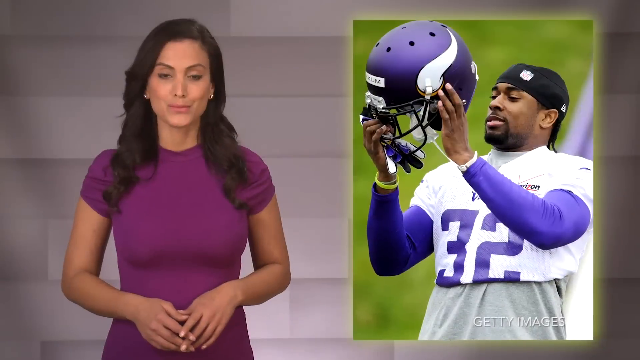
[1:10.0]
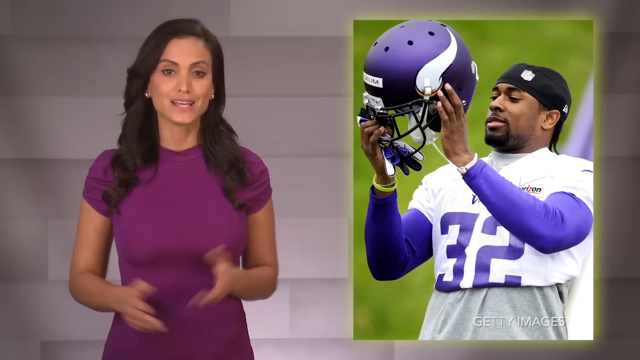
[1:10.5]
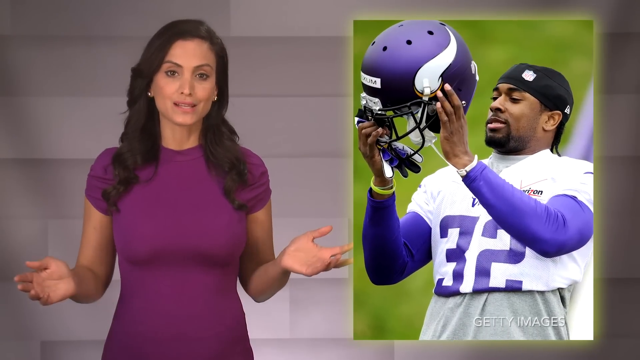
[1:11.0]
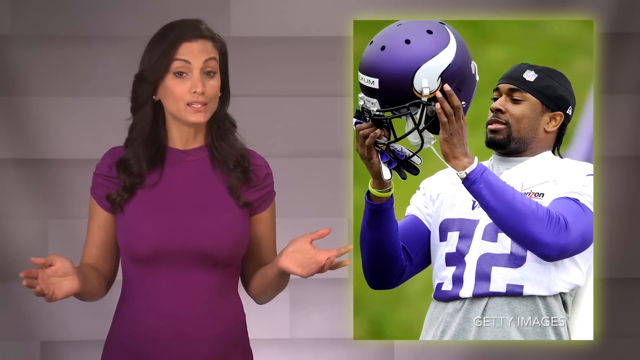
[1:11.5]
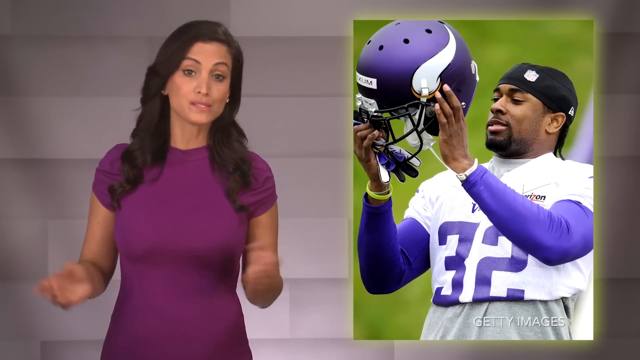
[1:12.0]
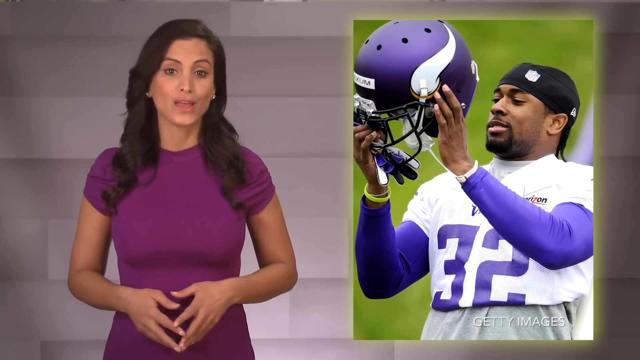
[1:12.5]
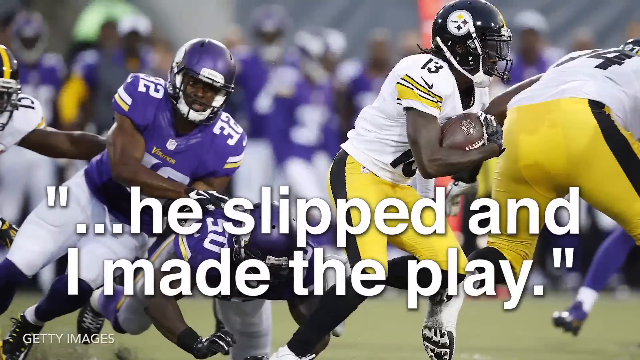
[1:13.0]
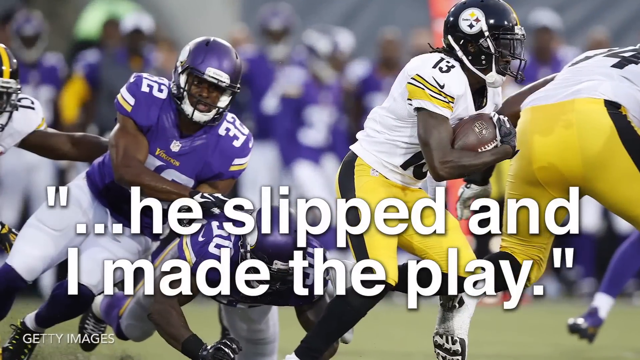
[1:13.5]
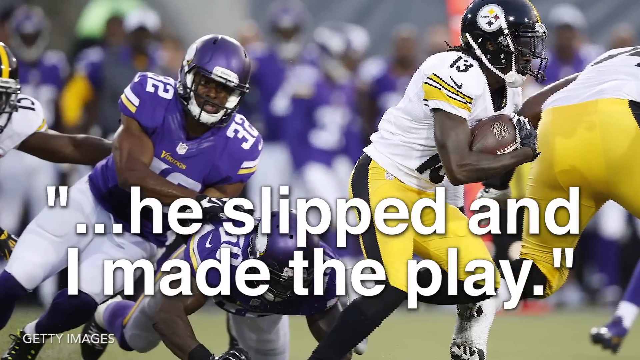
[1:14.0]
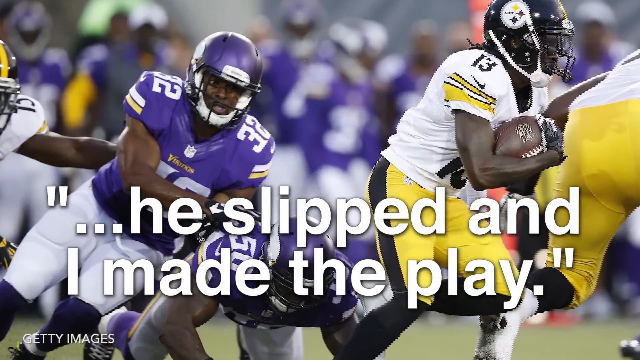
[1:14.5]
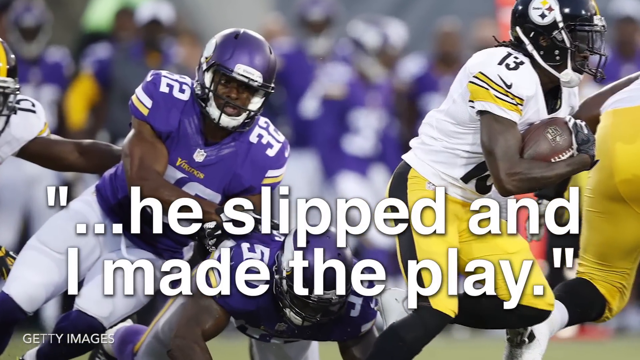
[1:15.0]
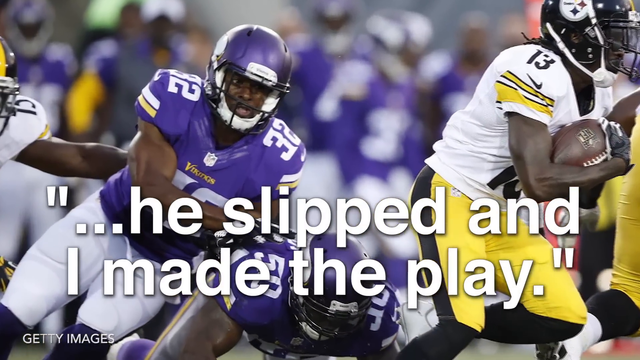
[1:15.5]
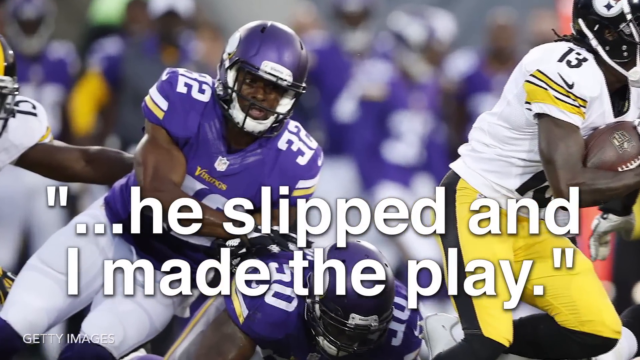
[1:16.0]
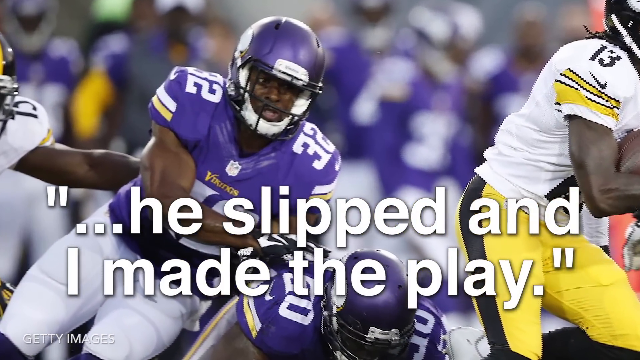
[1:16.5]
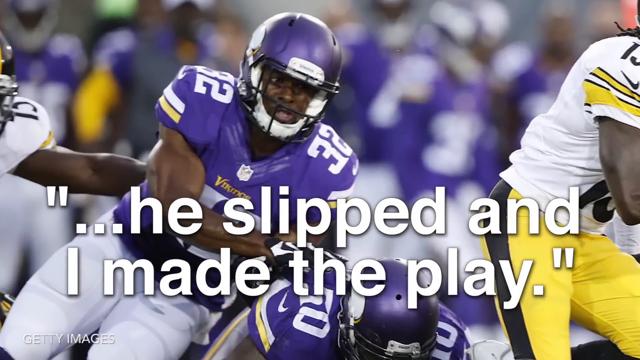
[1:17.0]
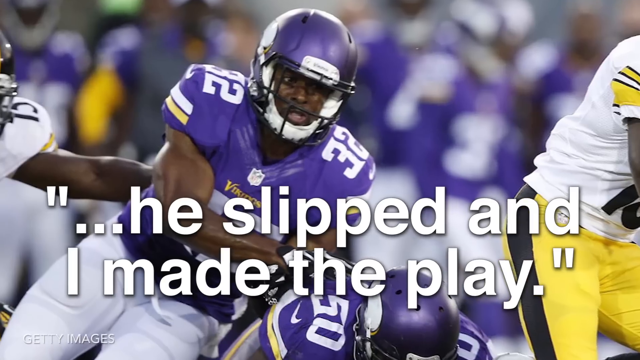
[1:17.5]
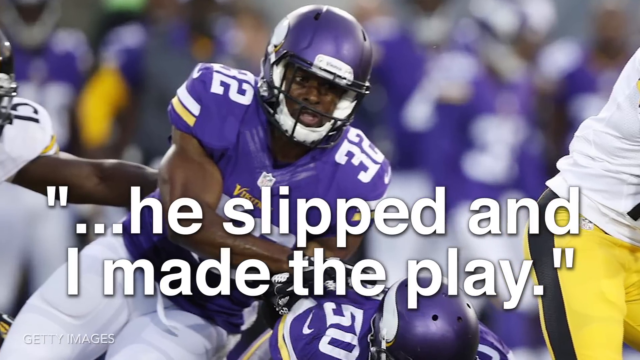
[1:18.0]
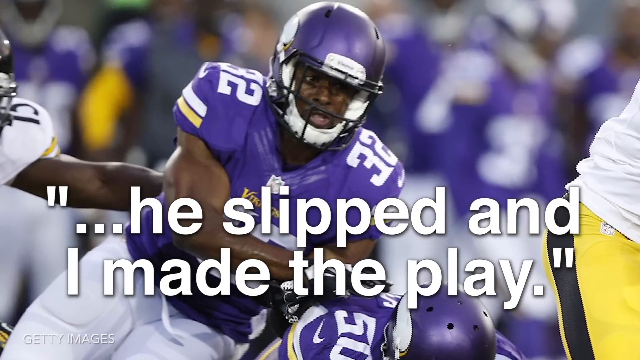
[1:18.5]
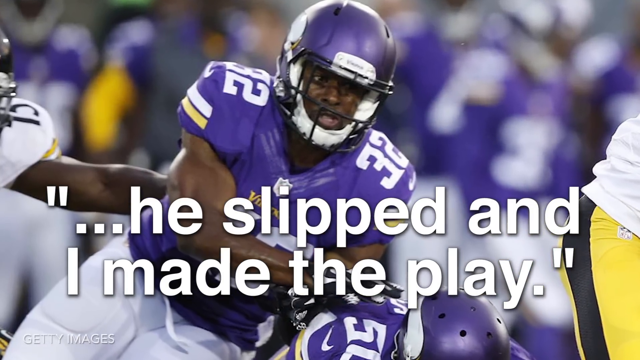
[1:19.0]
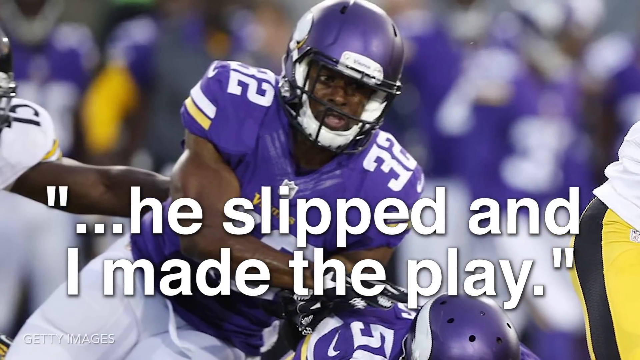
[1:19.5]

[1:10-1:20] A split screen shows, on the left, a woman with olive skin and dark hair who looks like a news reporter, talking and making gestures. On the right is a picture of a football player, number 32, an African-American man playing for the Vikings, in a purple helmet and a white jersey with a purple number 32 and purple sleeves. Next is a still action photo of him on the field with a teammate, surrounded by several Steelers players; it looks like the middle of a game. The rest of the team is blurred in the background, and number 32 looks very focused on the player holding the football in front of him. A quote underneath reads "he slipped and I made the play." The players not in purple uniforms wear black, yellow and white jerseys, with the Steelers logo on black helmets.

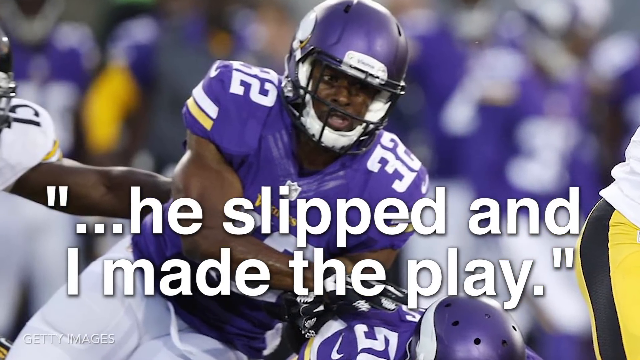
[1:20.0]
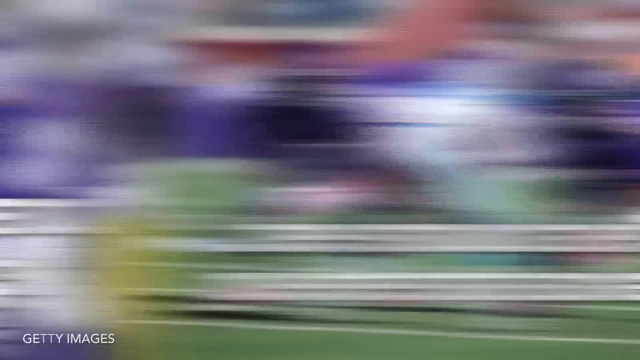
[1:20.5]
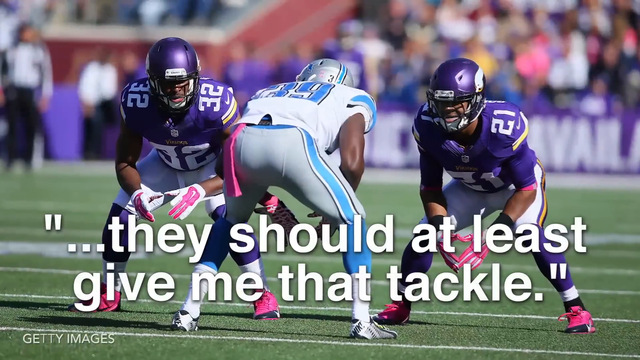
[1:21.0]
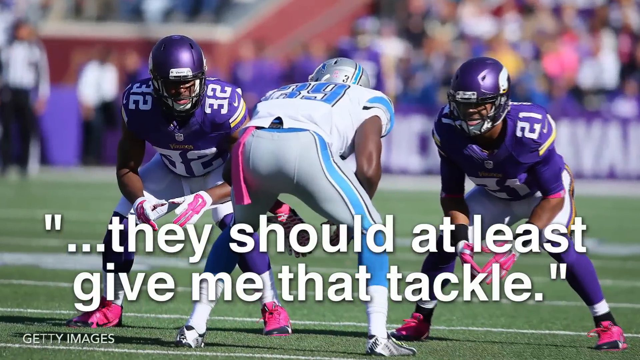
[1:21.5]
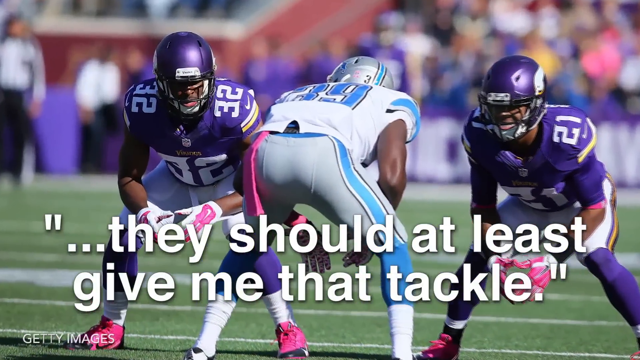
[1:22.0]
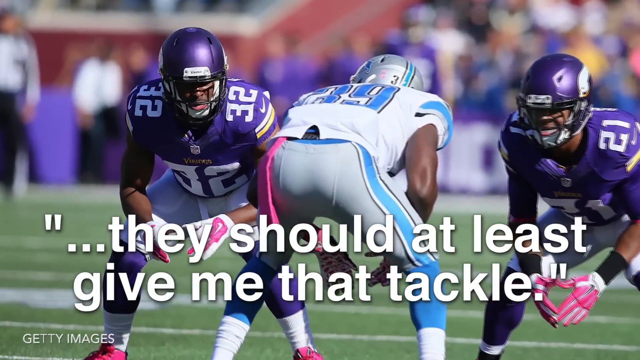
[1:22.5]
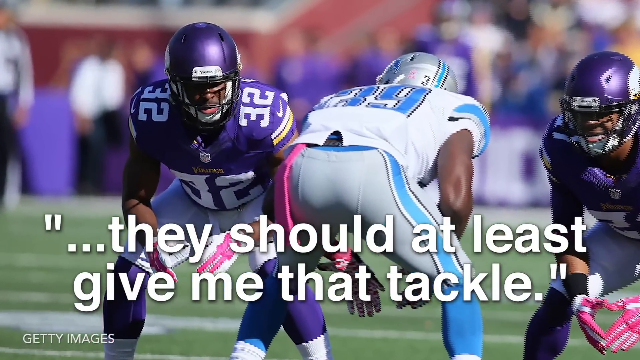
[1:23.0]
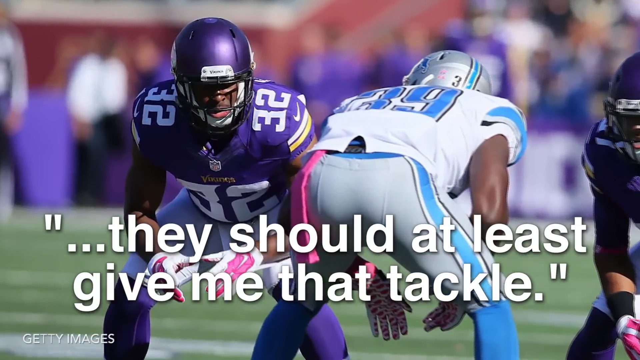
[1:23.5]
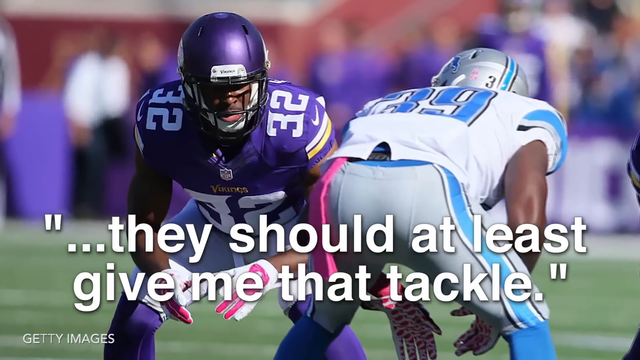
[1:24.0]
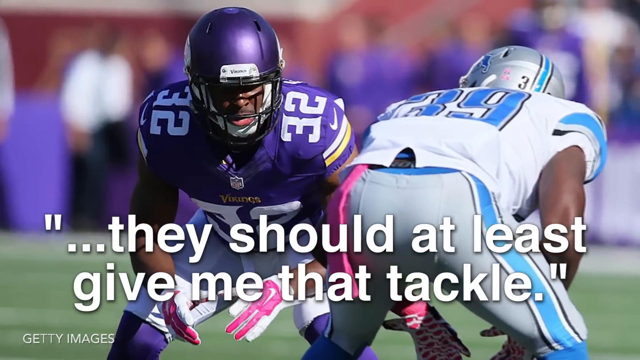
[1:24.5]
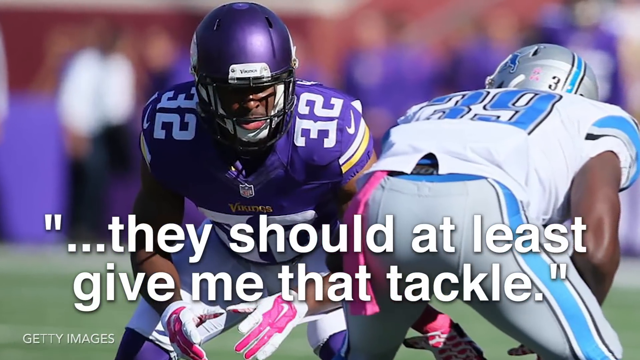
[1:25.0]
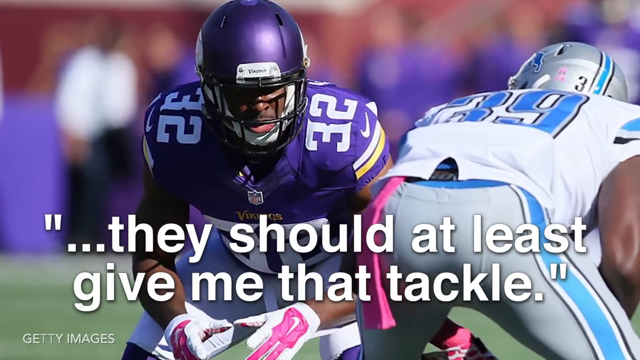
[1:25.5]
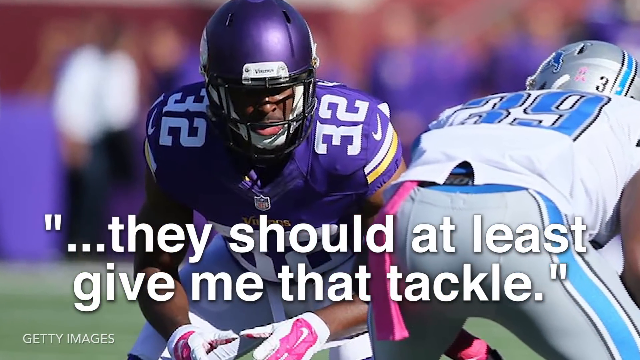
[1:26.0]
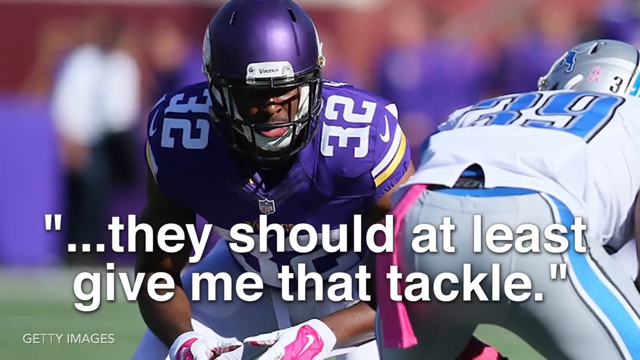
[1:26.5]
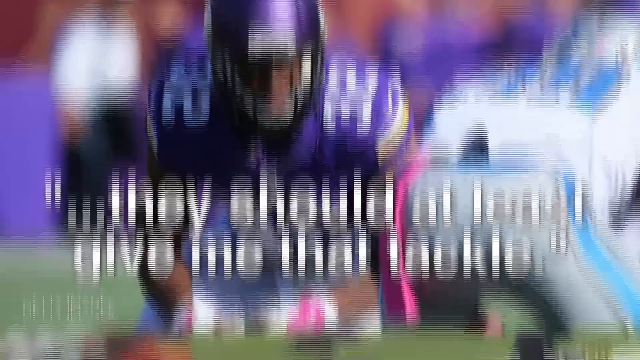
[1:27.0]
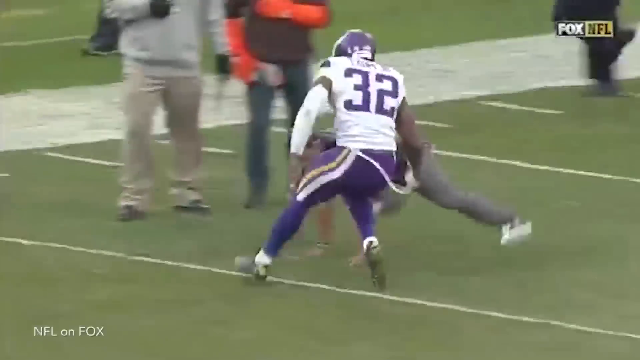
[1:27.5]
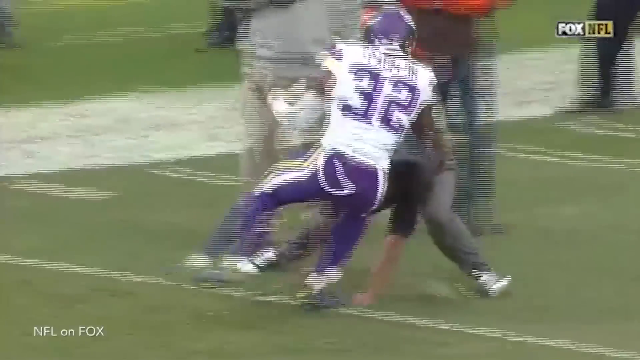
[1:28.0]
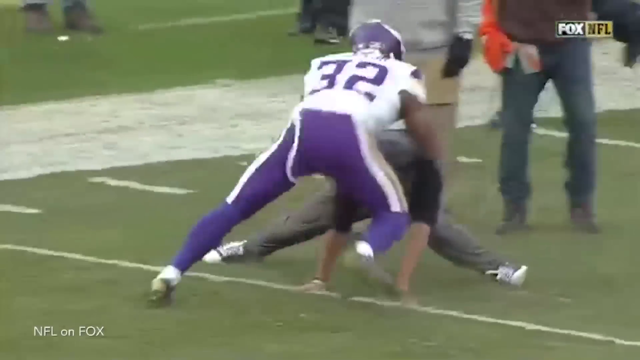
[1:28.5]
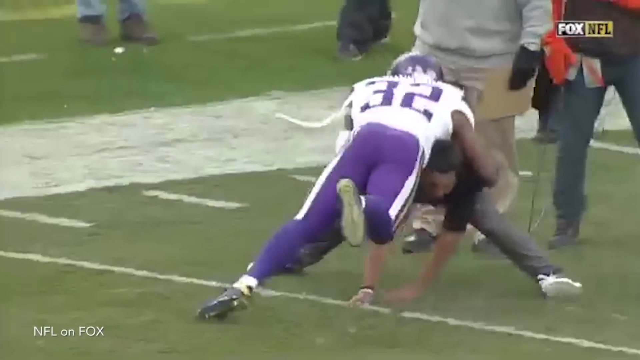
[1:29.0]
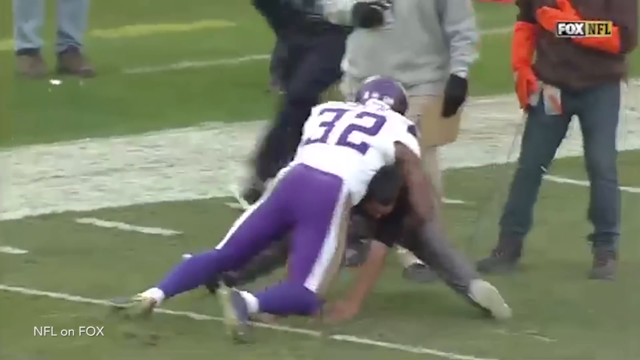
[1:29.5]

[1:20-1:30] A still image shows the Vikings' number 32, an African-American man, in a purple helmet, purple jersey, white pants, what look like purple knee warmers, and pink football cleats. He faces his opponent, number 39, who wears a white jersey with light blue stripes and light blue numbers and a silver helmet. He stands next to his teammate, Vikings number 21, also an African-American man; both are hunched over as if about to start a play. A quote underneath reads "they should at least give me that tackle." The split screen returns to the reporter, who has dark hair and a purple-pink shirt. Then footage shows the number 32 player tackling a man on the side of the football field with a number of staff members around, and they fall to the ground.